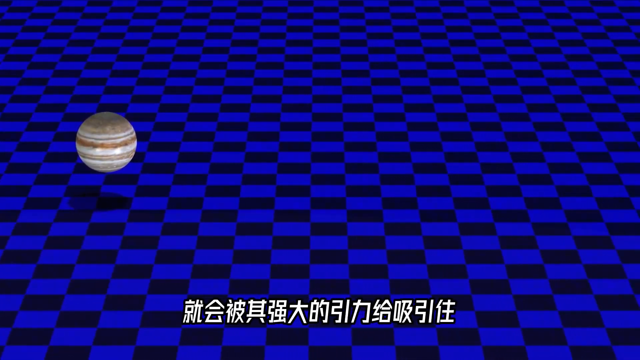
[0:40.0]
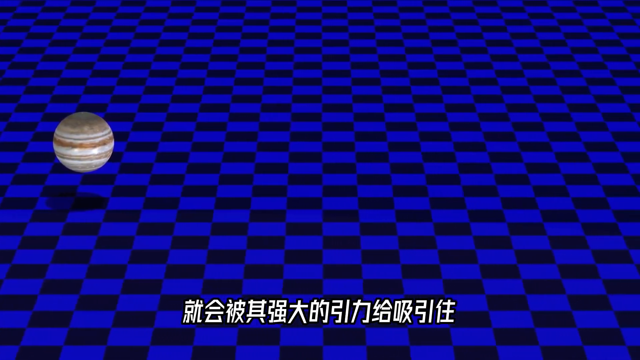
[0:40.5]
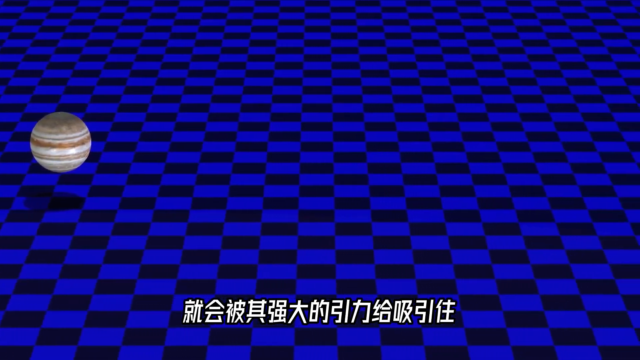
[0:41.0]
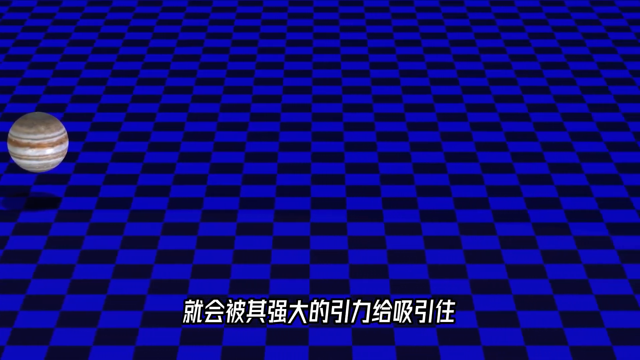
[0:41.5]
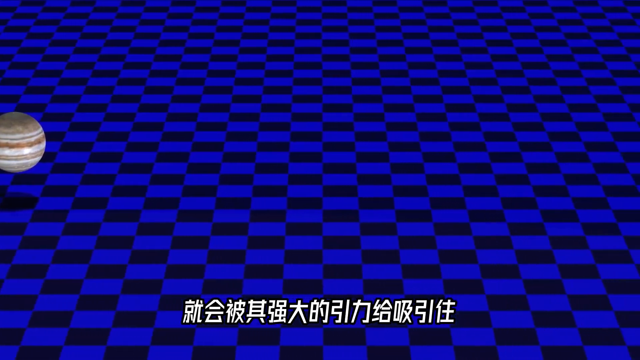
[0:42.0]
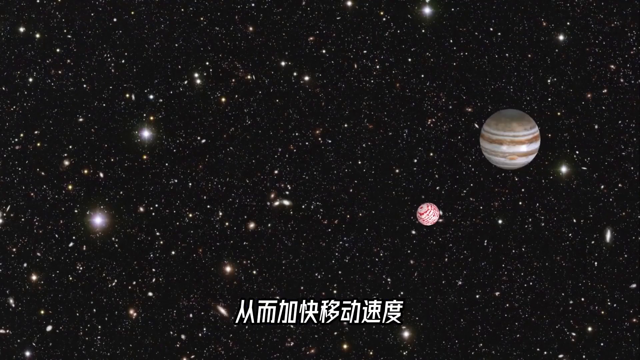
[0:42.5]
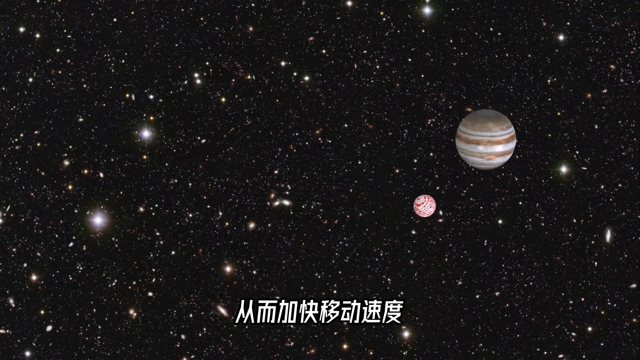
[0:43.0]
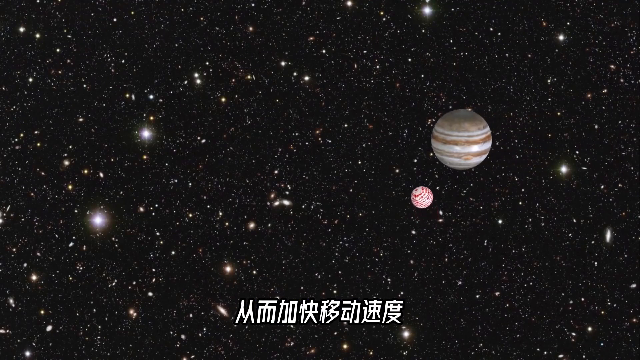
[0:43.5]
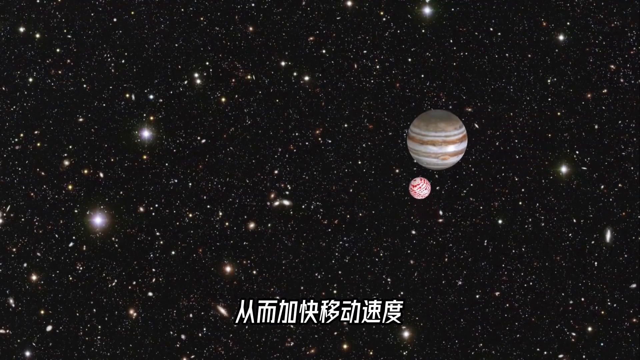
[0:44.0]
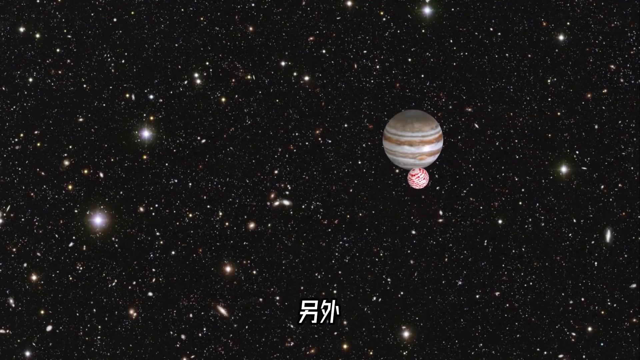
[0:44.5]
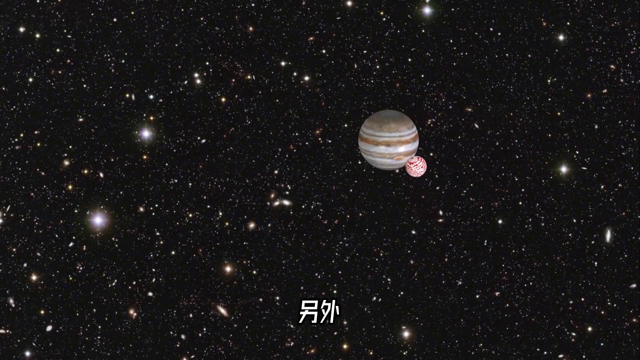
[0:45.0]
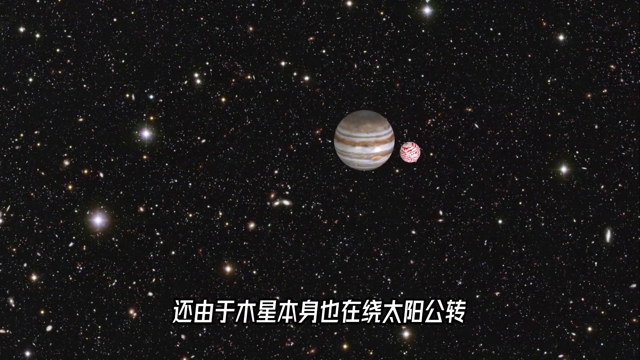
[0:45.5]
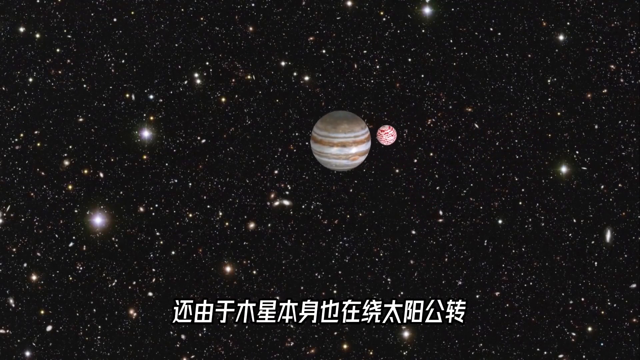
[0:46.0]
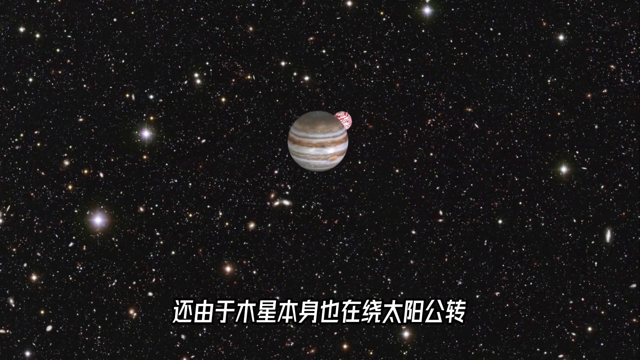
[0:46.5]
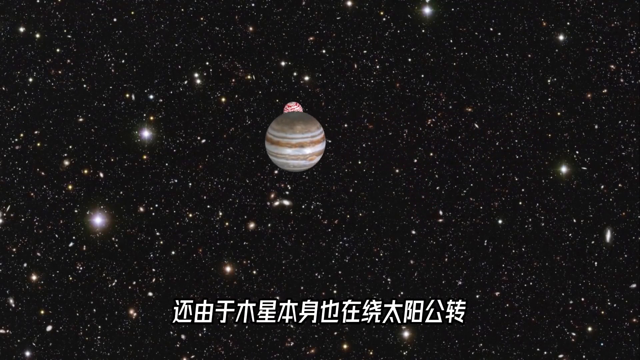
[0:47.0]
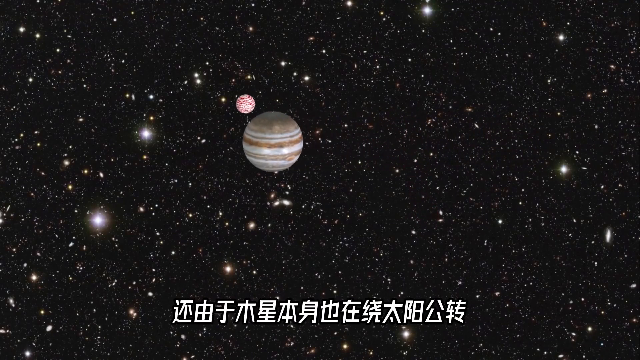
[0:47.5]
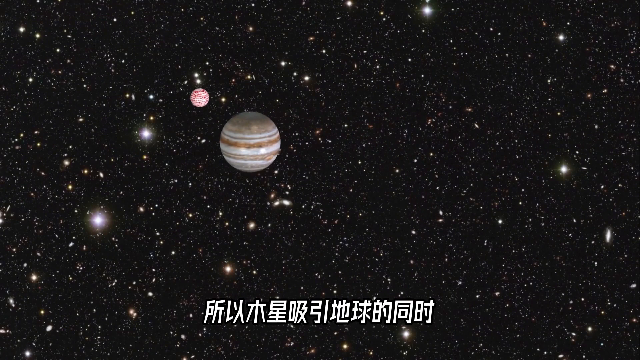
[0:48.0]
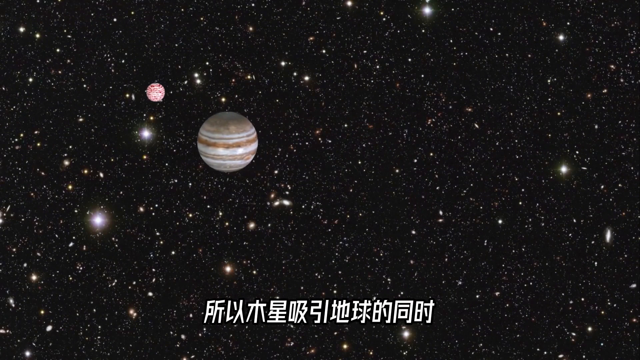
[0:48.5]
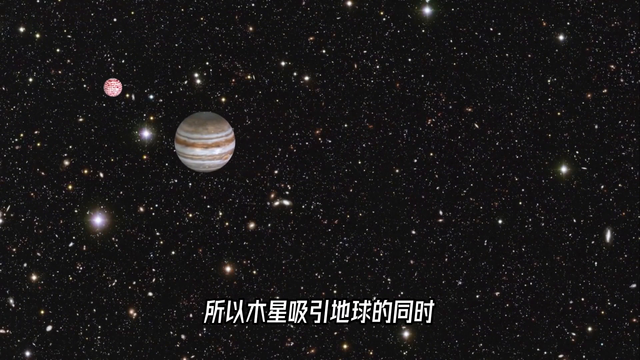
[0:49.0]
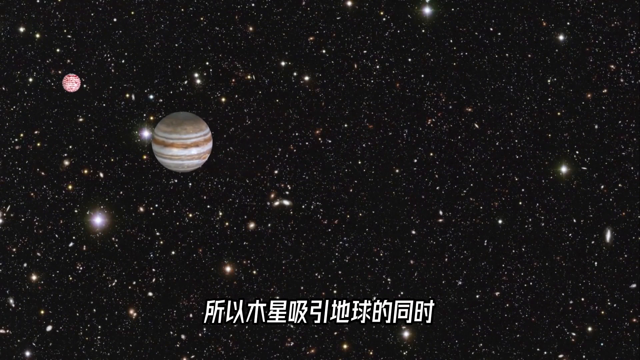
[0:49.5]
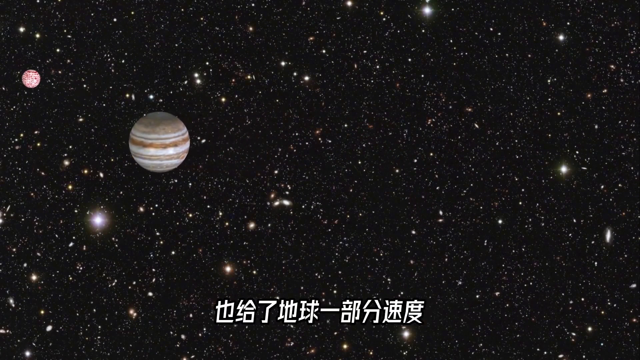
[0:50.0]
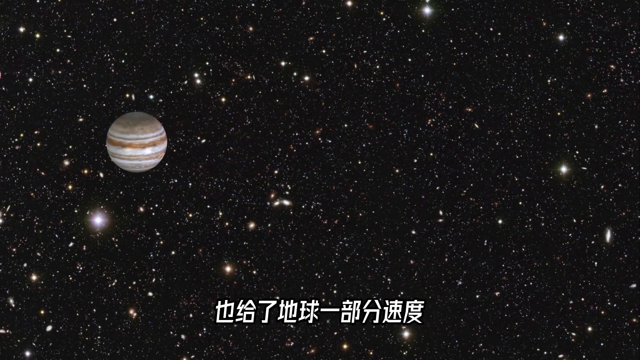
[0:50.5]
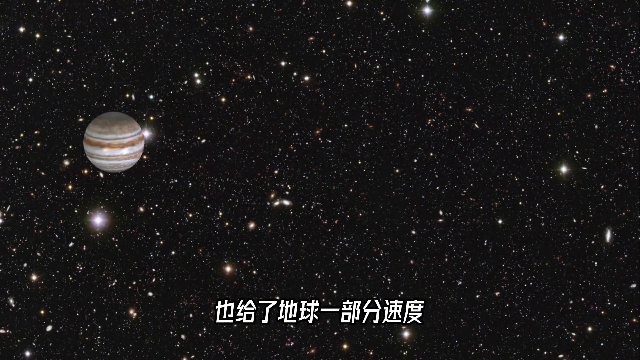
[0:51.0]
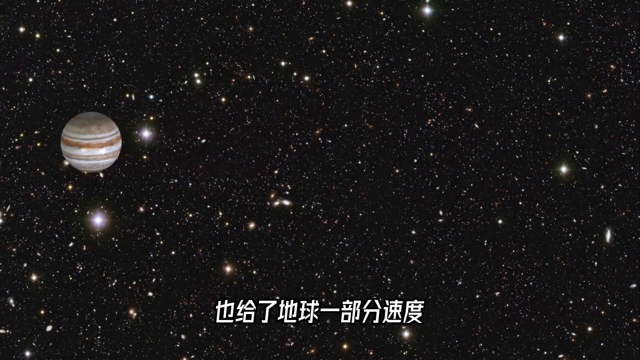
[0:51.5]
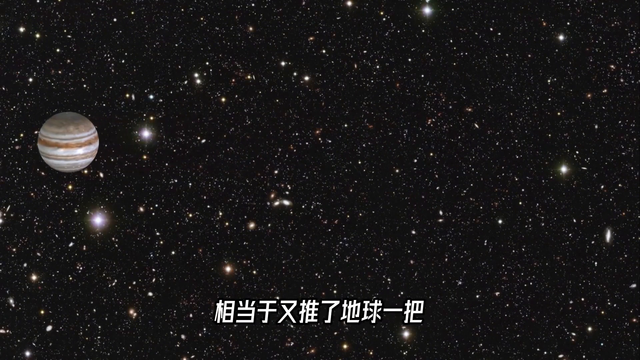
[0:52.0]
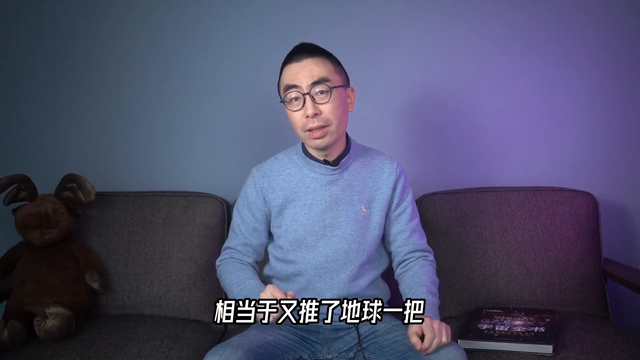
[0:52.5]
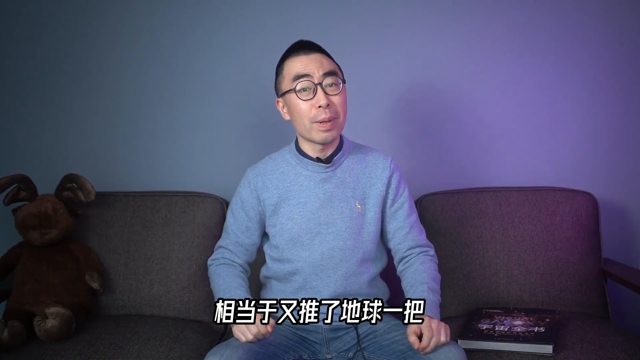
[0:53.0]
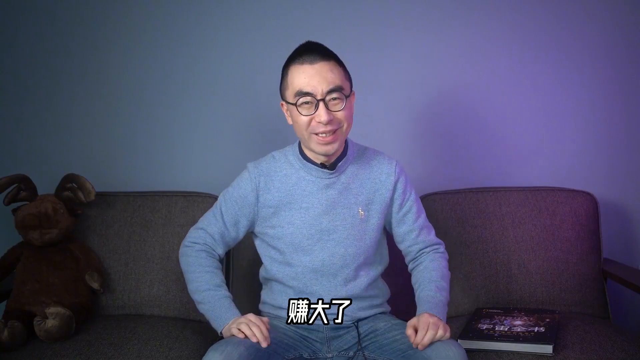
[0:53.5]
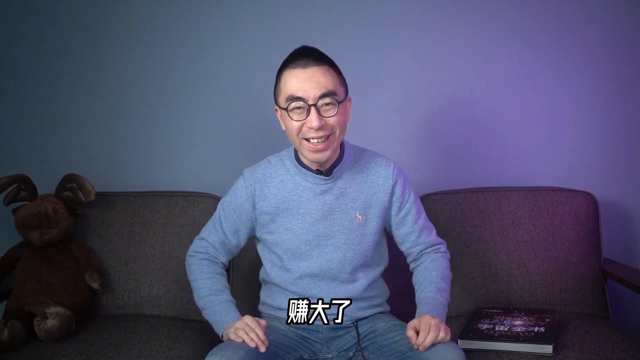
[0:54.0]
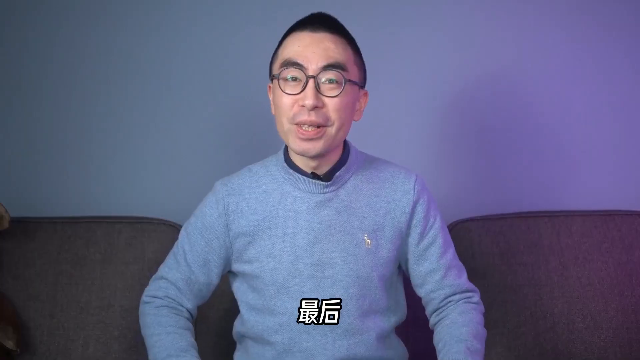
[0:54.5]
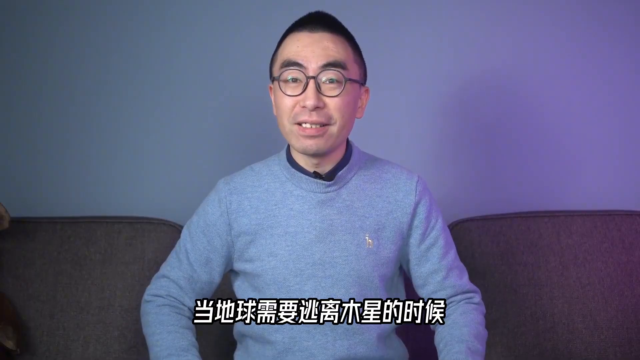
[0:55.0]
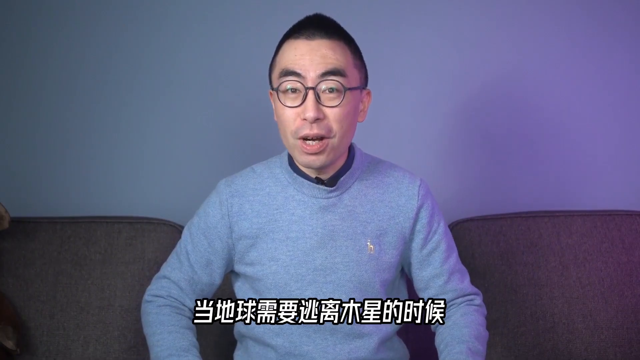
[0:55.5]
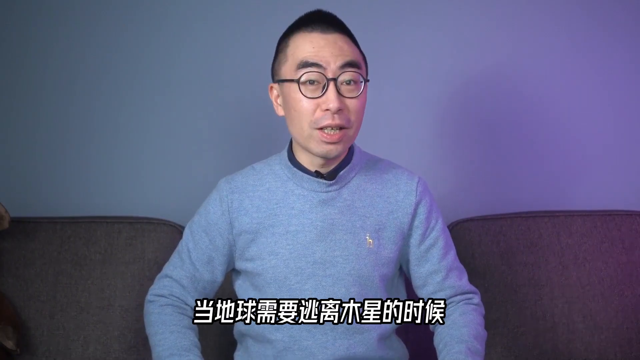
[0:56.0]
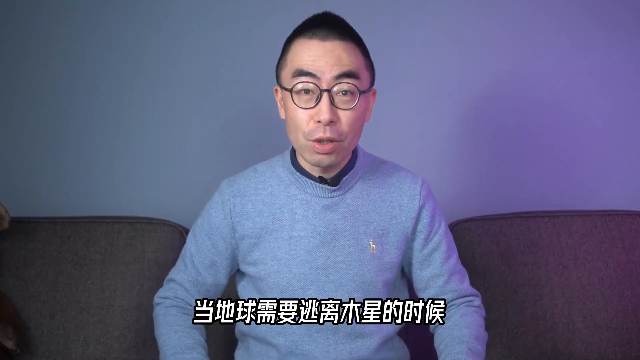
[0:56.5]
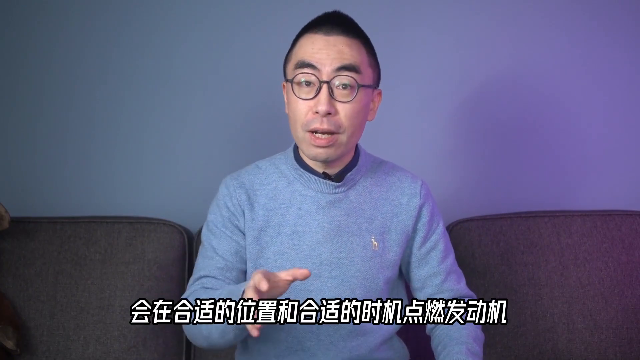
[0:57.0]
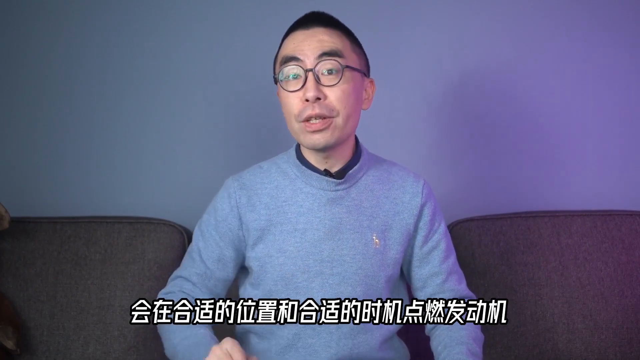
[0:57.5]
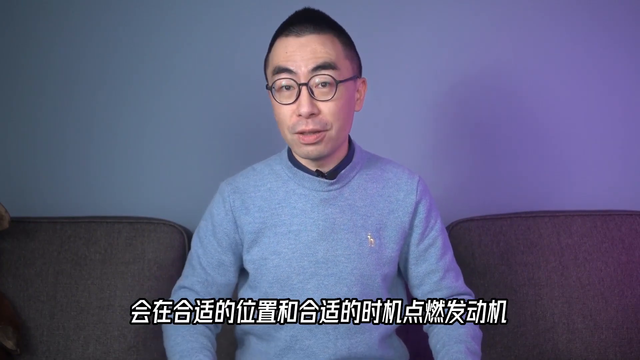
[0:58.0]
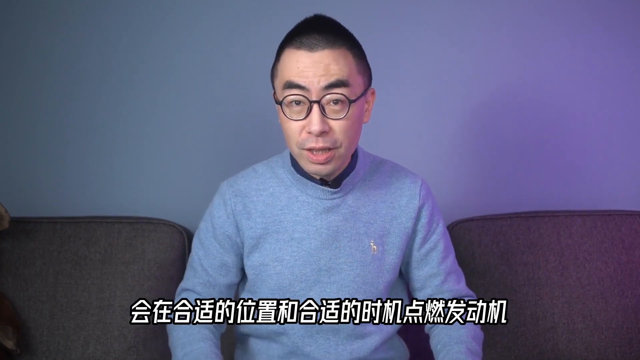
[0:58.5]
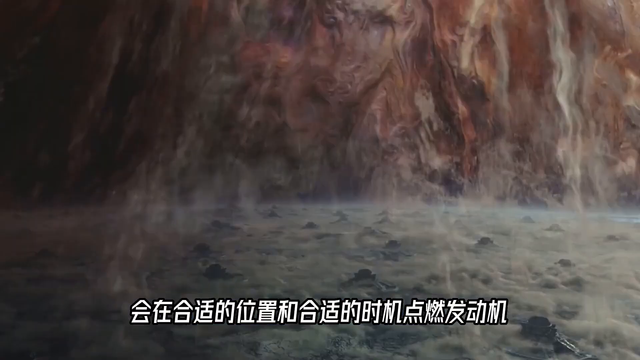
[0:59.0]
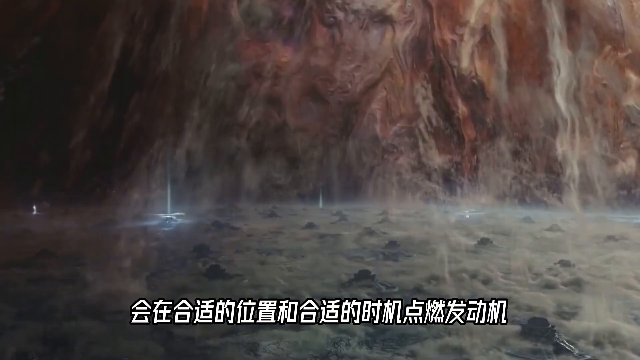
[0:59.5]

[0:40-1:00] Outer space fills the background, the screen covered with countless glowing stars; to the left, several stars are much brighter than the others. The central focus is two planets orbiting around one another, one striped red and white and the other striped light blue and gray. The planets almost collide and then begin orbiting around each other. Next, indoors, a man sits on a couch wearing a long-sleeved blue sweater. He is Asian, with large circular eyeglasses, short black hair and thick black bushy eyebrows. To the left of the man on the couch is a brown stuffed moose.